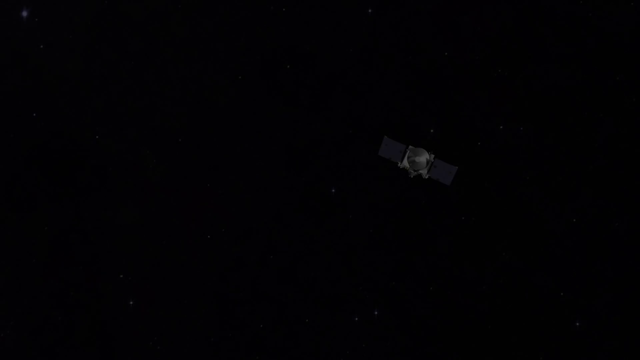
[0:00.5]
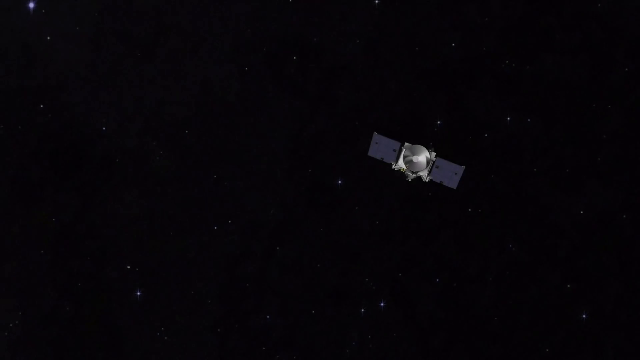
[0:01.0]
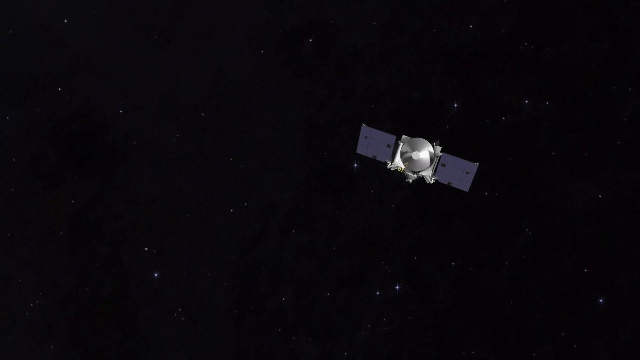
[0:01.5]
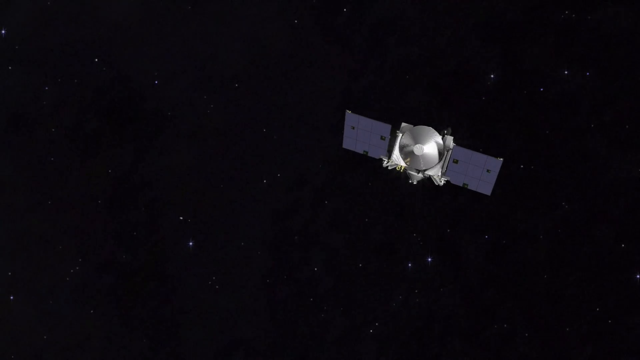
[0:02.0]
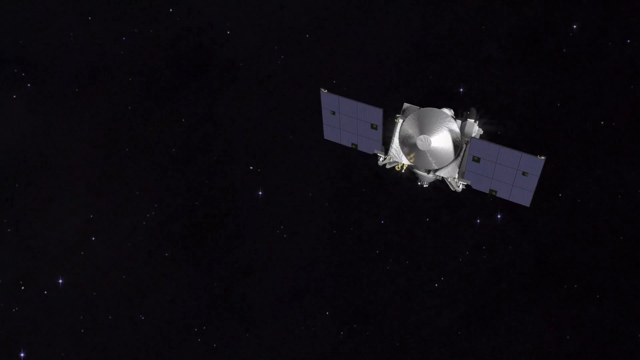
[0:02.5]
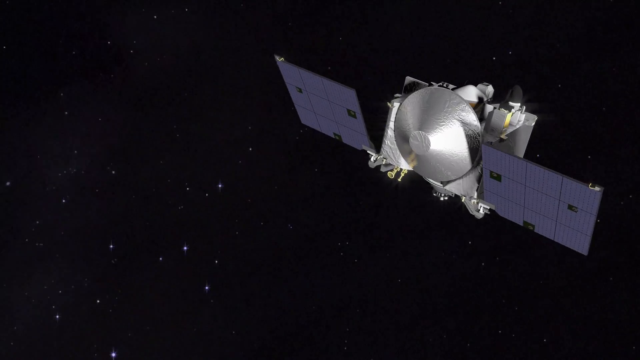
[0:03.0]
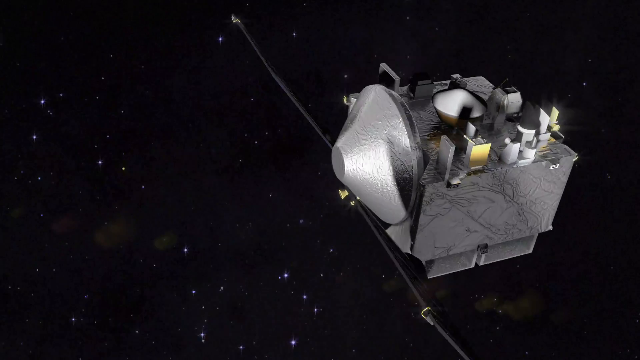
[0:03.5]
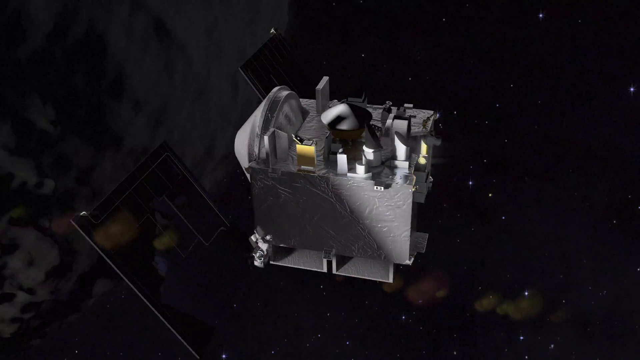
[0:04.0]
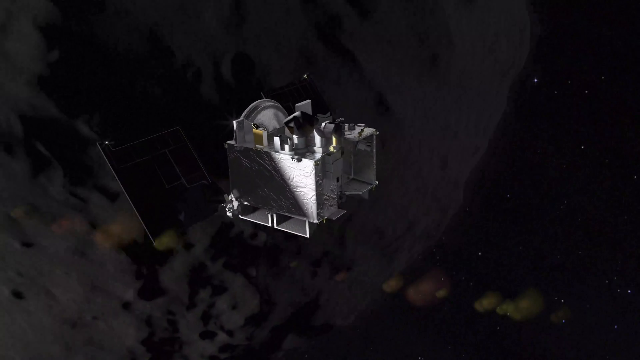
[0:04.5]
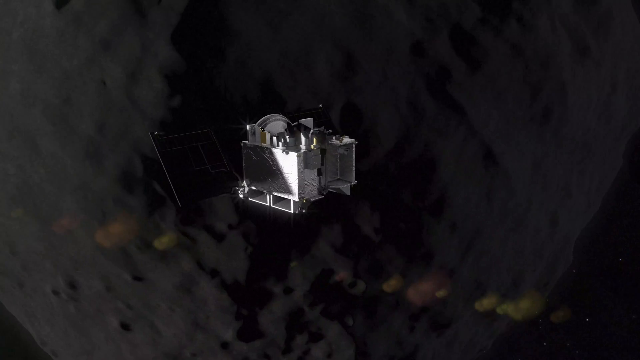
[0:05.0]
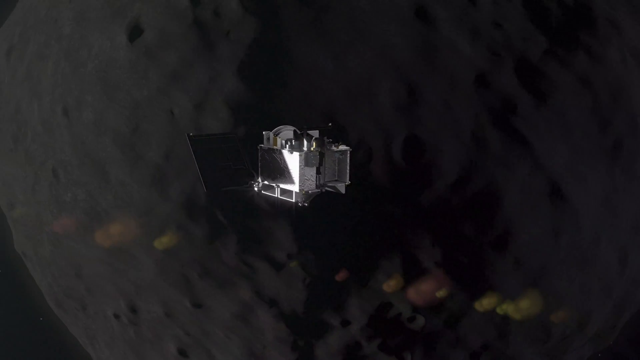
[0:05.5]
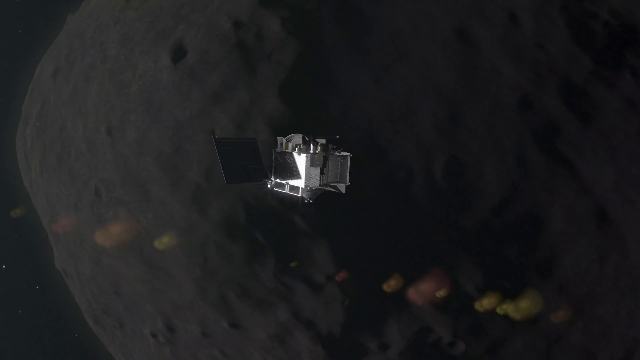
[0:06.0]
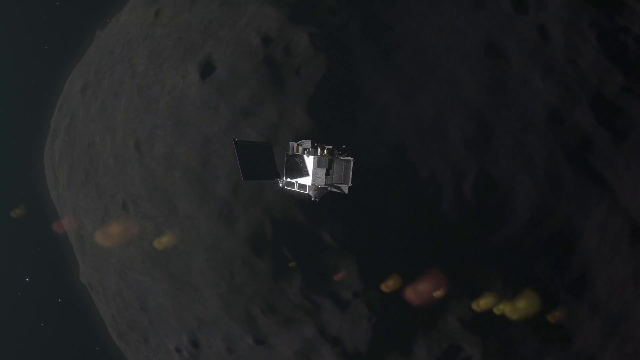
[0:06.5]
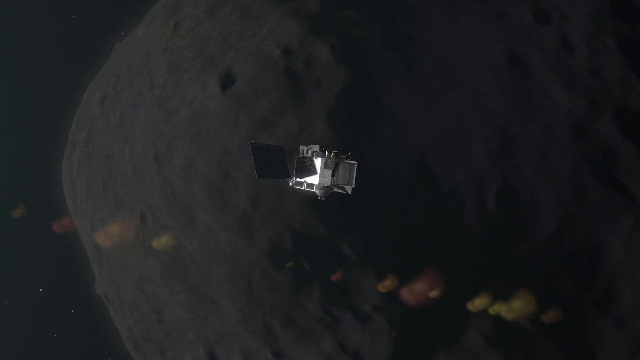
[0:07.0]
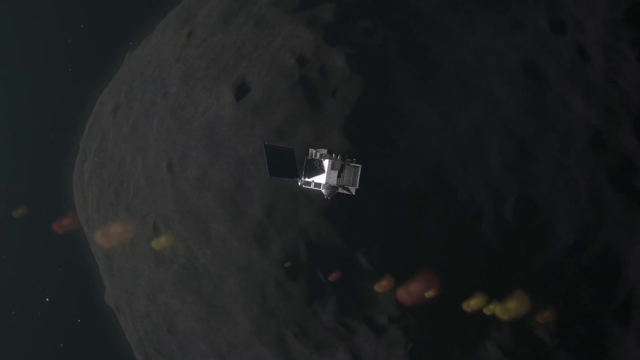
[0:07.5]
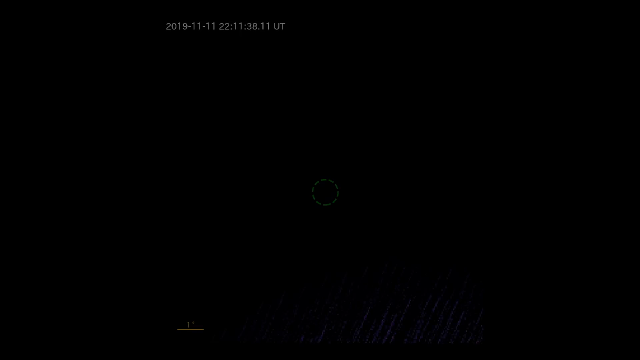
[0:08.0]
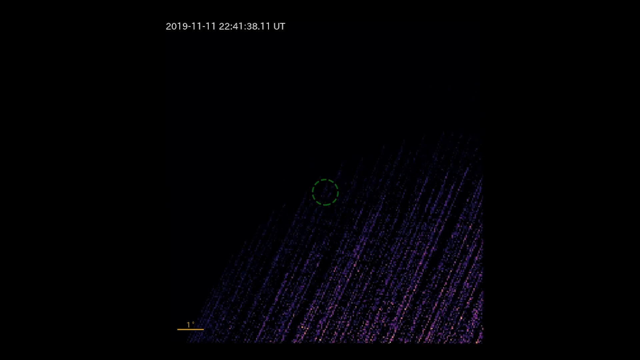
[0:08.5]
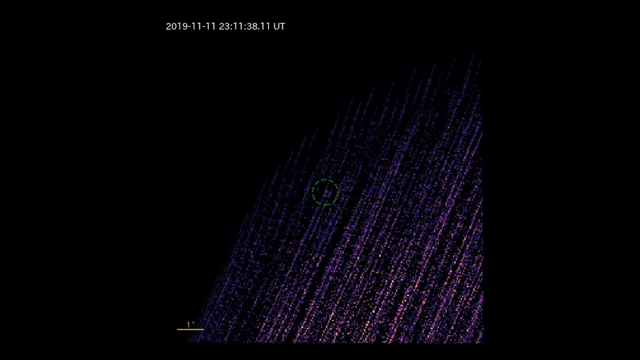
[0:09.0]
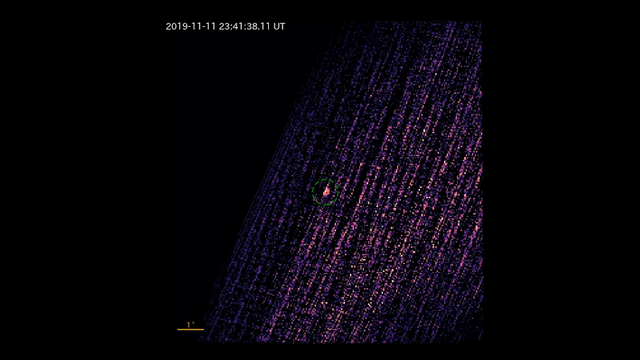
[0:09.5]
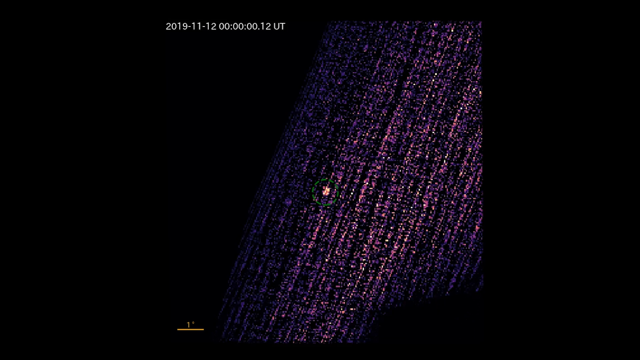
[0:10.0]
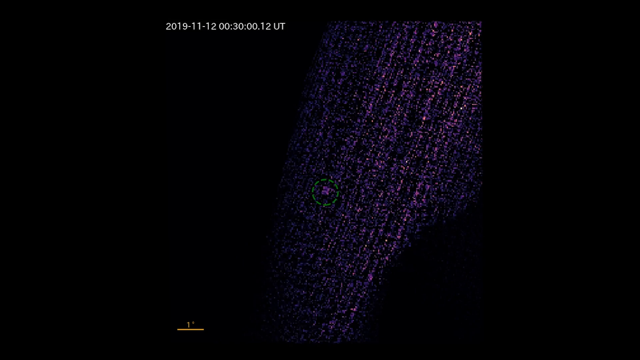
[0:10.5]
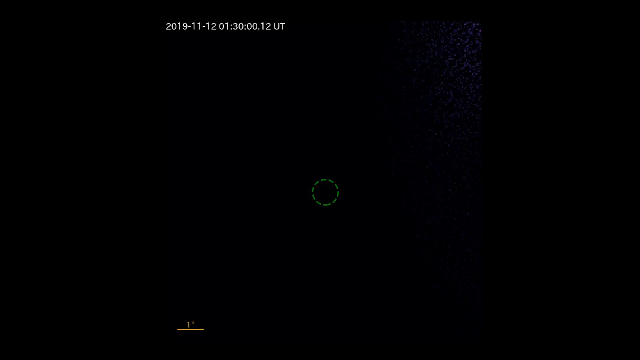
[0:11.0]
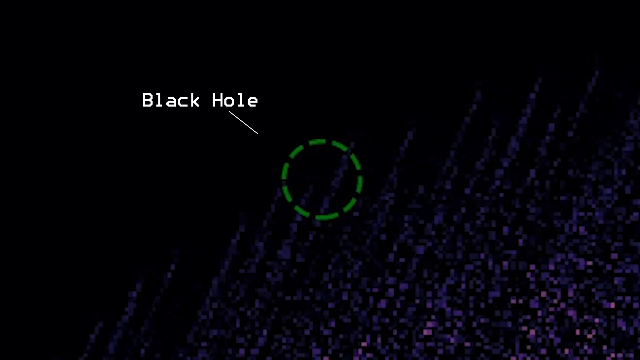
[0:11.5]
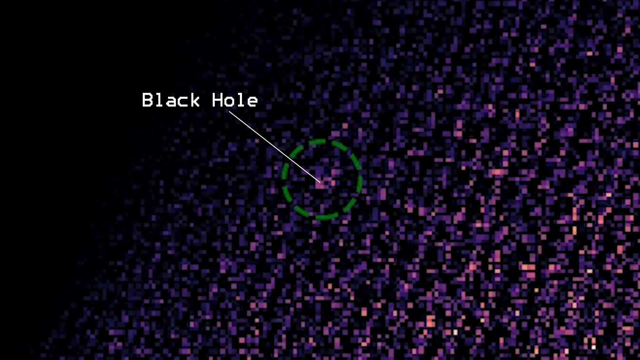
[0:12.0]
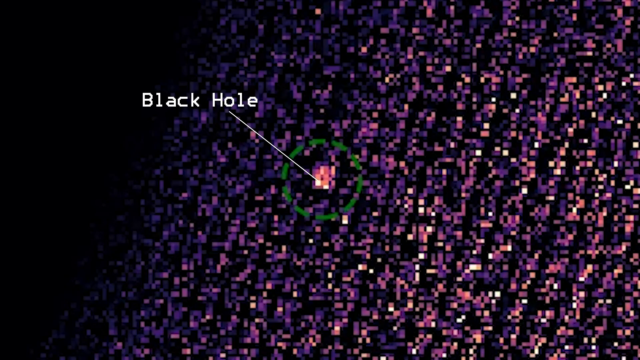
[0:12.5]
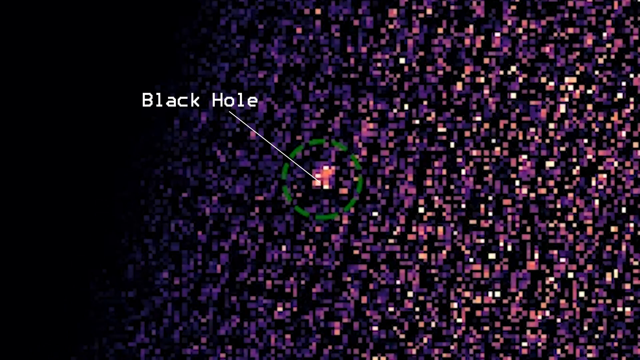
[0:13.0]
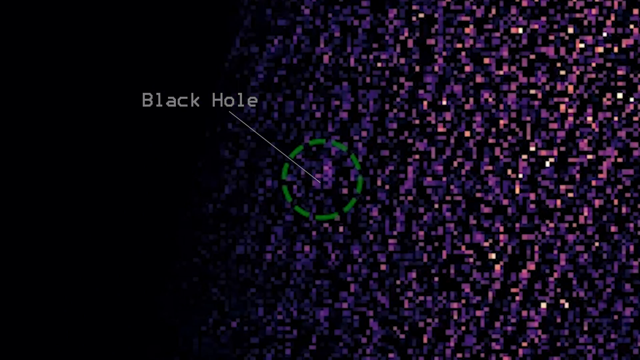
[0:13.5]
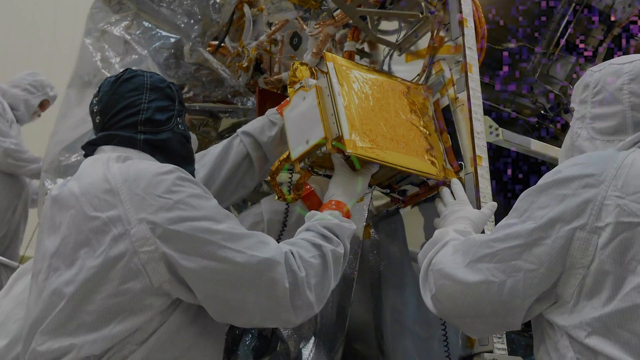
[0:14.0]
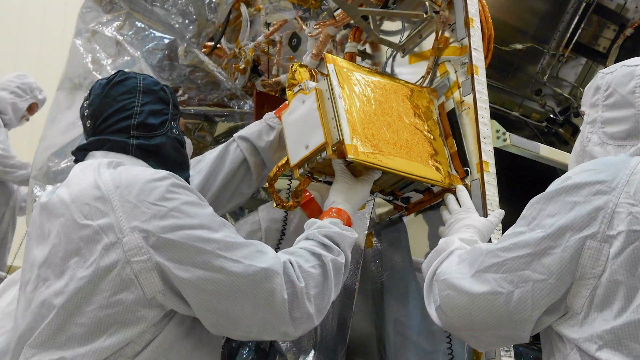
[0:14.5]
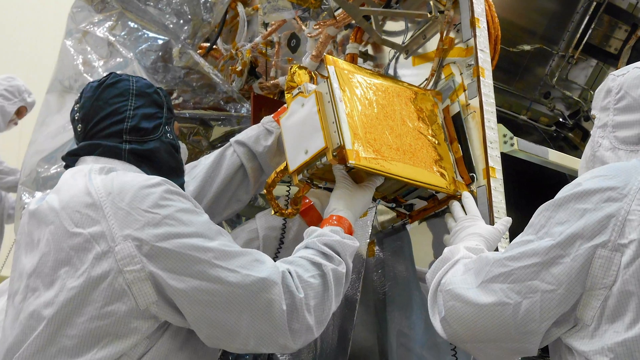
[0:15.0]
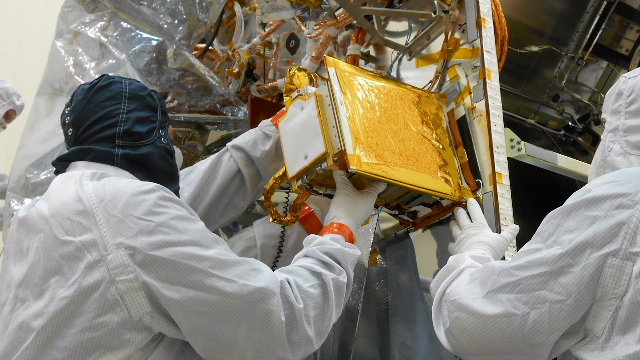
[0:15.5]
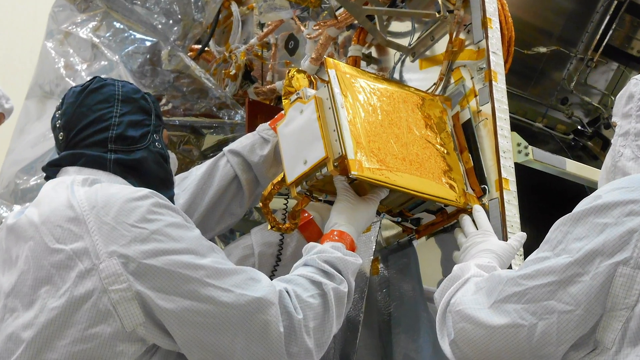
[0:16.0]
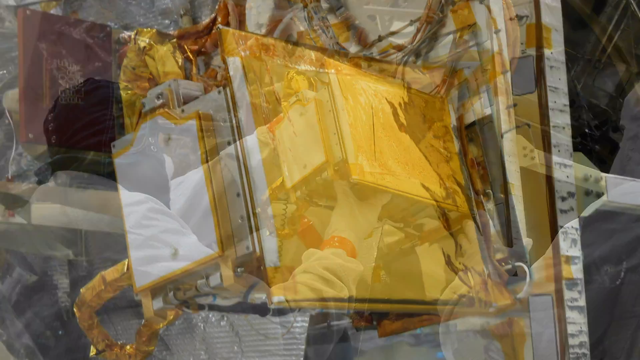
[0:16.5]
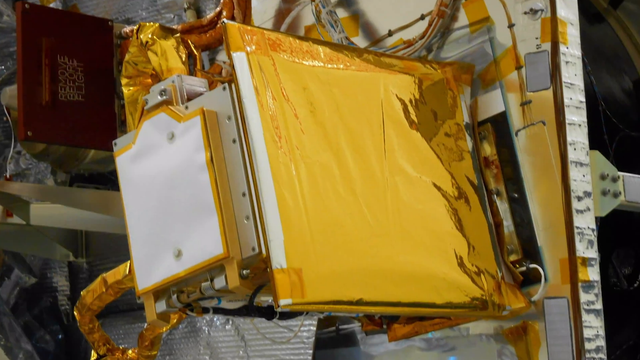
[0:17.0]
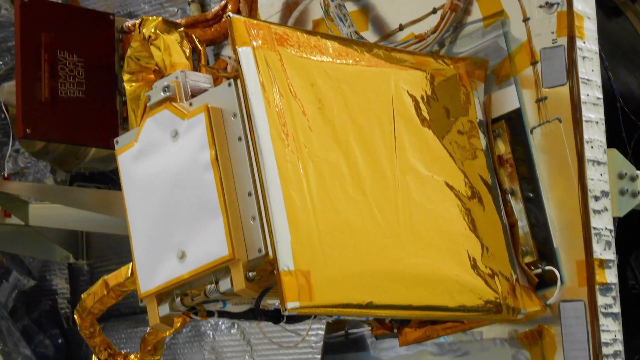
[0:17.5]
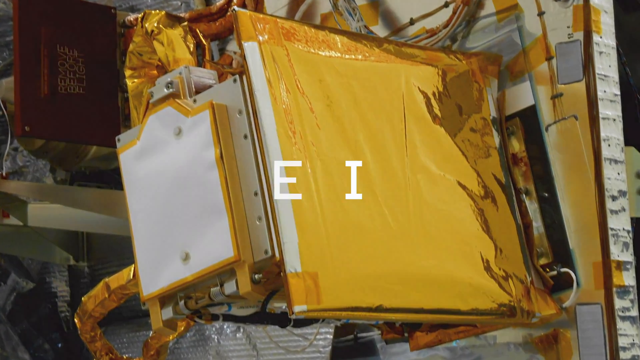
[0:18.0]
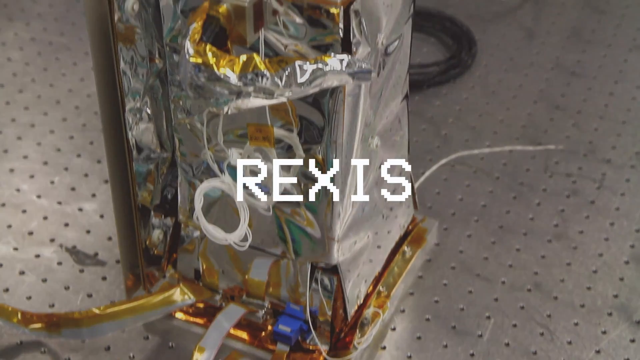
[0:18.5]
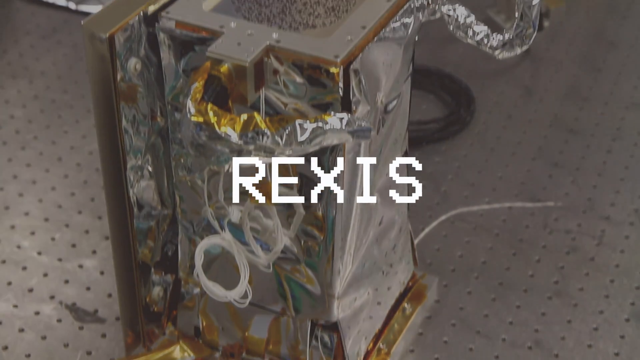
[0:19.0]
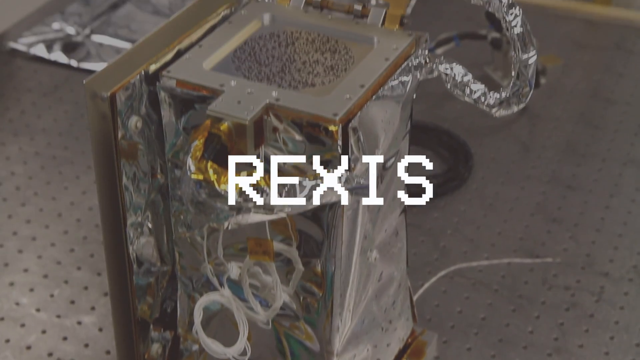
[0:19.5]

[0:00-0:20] The video opens on a scene in outer space, with the black galaxy and stars in the distance. A spaceship or satellite comes towards the camera. It has a central body with two square outer sides attached; the front is like a cone with a flattened end in the centre, and the body is a cube. It is traveling towards a planet with an uneven surface. The view then changes to a dark screen with purple stripes running to the centre at an angle. A green dotted circle highlights a small area of brighter colour. At the top of the screen a date reads "2019-11-11" and a time reads "23.56.38.11UT". The time changes, and the purple lines disappear, leaving a black screen. Next comes a close-up of a circle made up of small green segments, with an arrow pointing towards it labelled "black hole". A close-up of the purple stripes shows the black hole, which looks like a light pink and white shape; the purple lines and the black hole shape look pixelated. People in white overalls and white gloves, wearing hoods and masks, work on the outside of a space construction. A close-up shows a box called the Rexis with gold and silver foil around it.